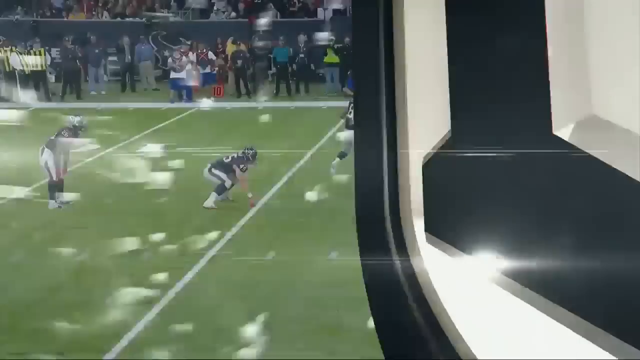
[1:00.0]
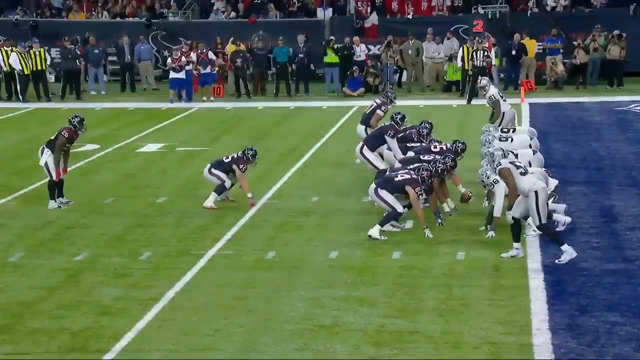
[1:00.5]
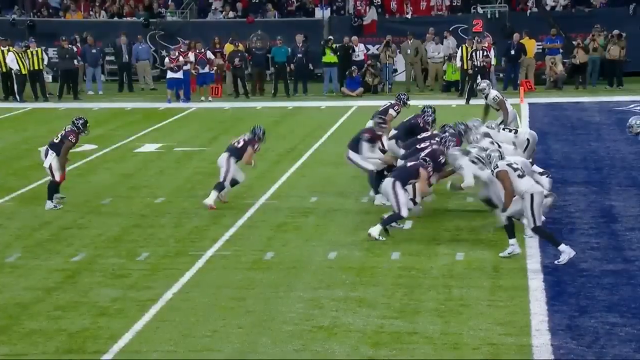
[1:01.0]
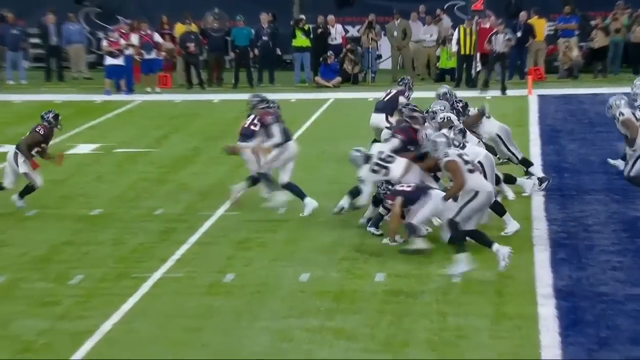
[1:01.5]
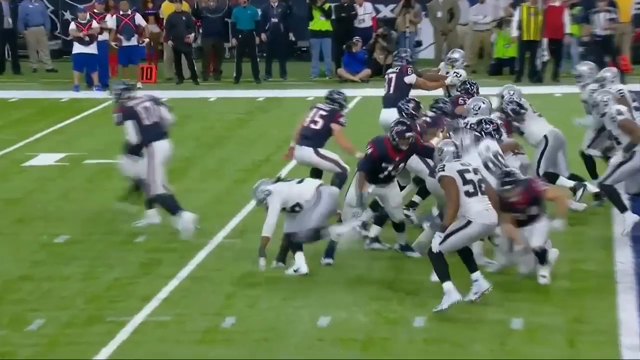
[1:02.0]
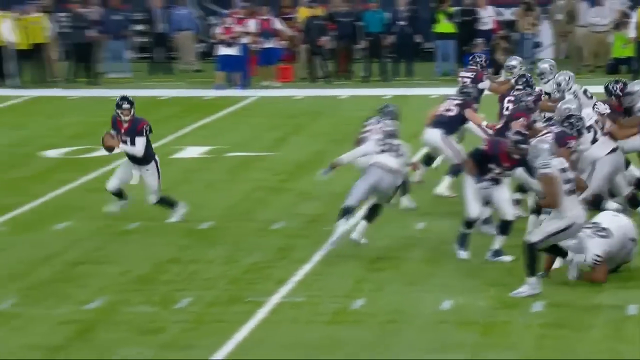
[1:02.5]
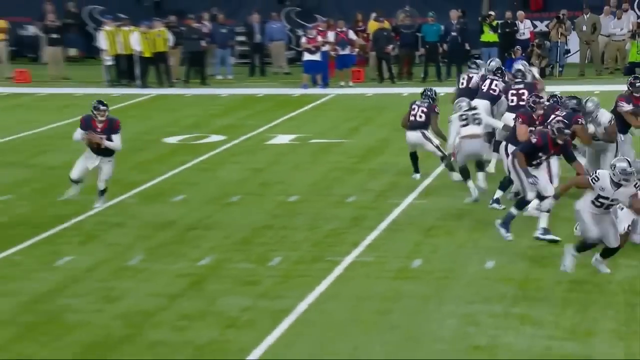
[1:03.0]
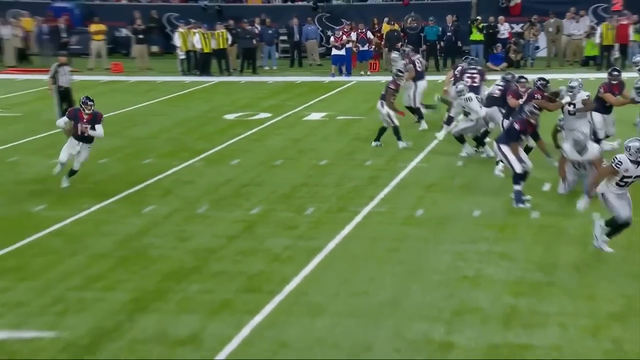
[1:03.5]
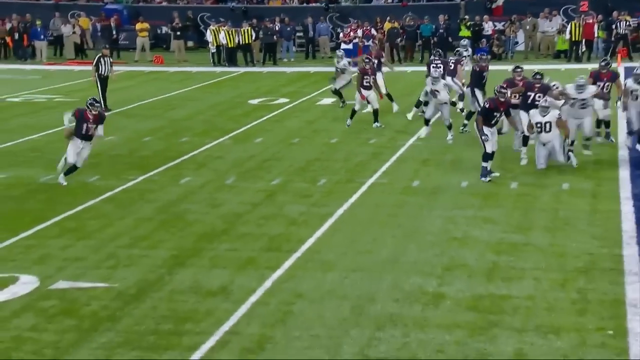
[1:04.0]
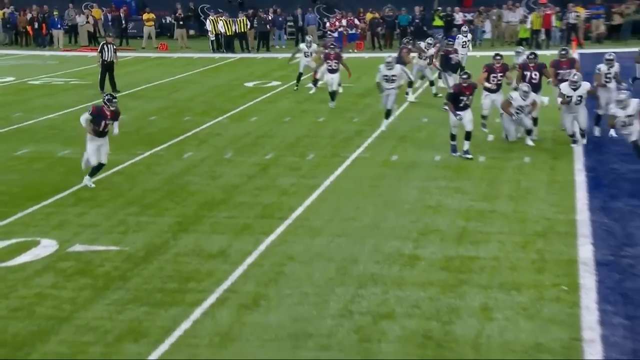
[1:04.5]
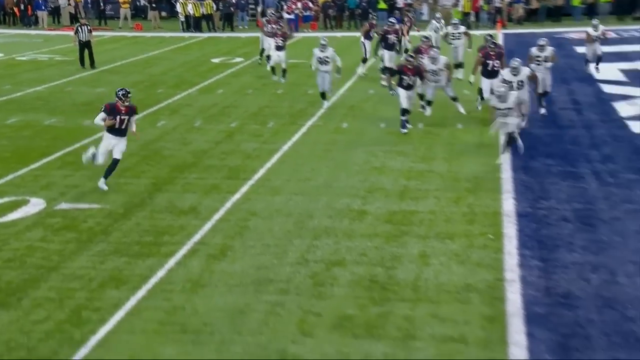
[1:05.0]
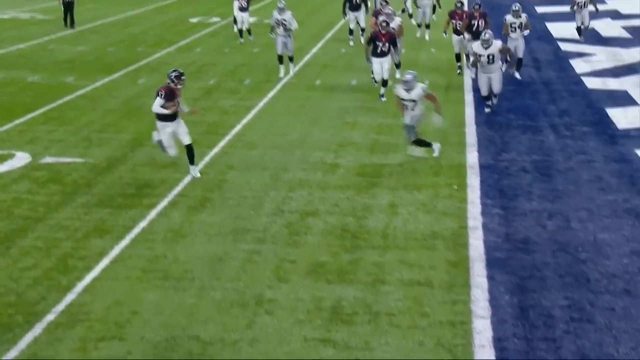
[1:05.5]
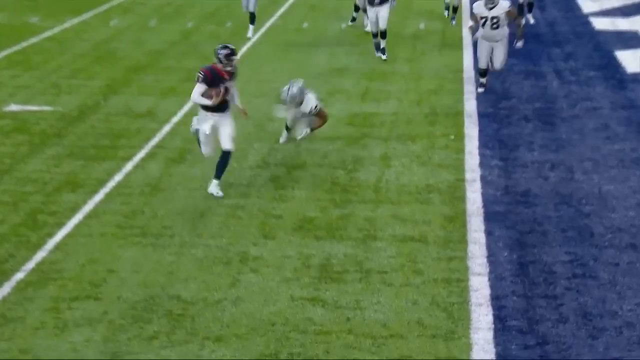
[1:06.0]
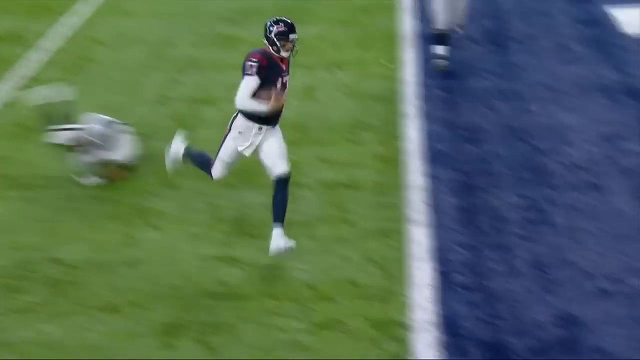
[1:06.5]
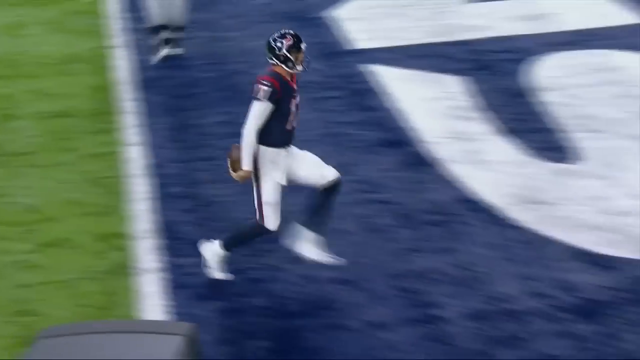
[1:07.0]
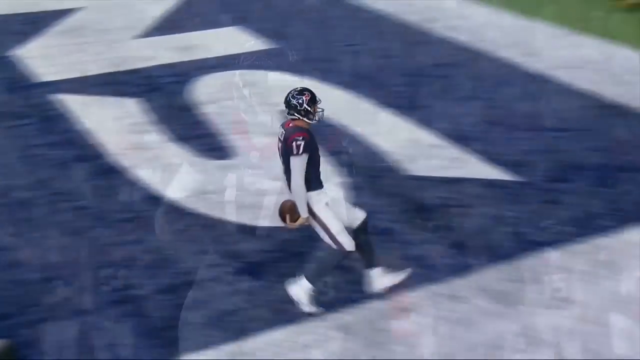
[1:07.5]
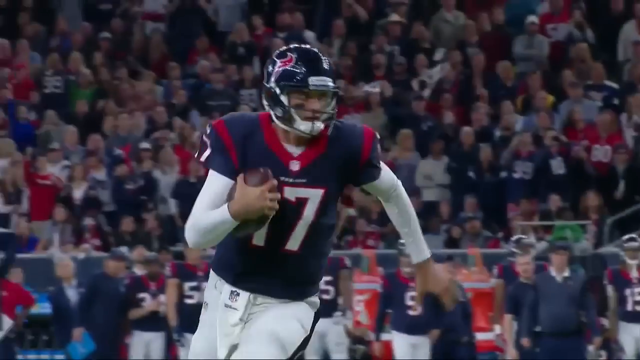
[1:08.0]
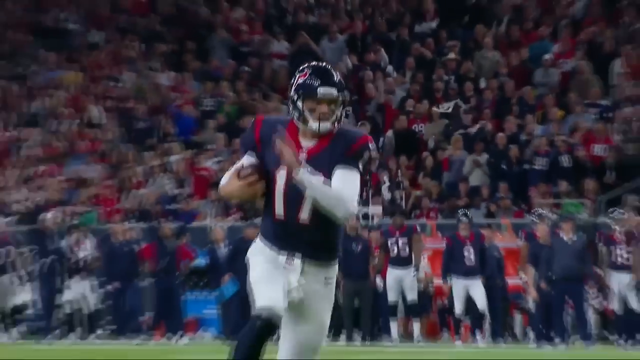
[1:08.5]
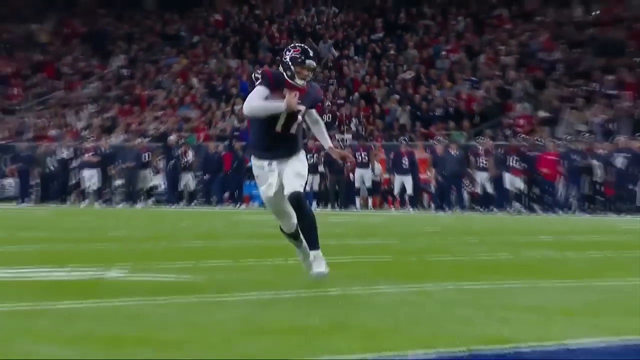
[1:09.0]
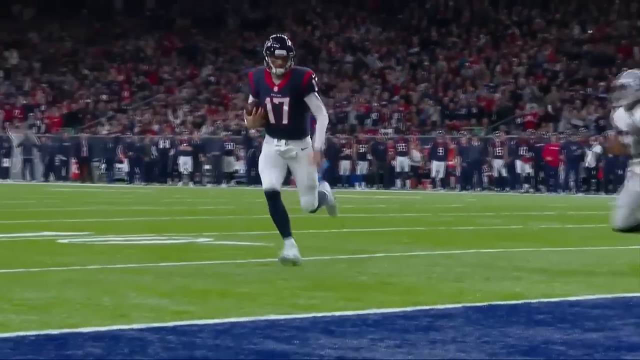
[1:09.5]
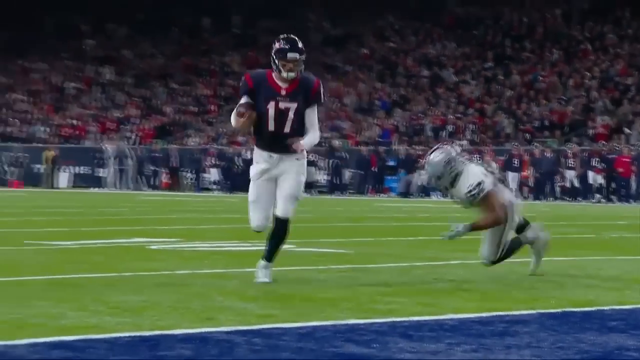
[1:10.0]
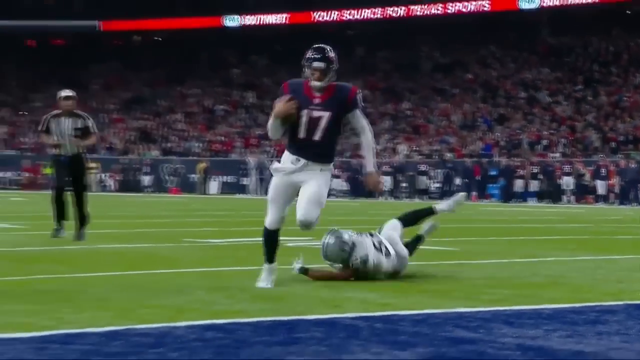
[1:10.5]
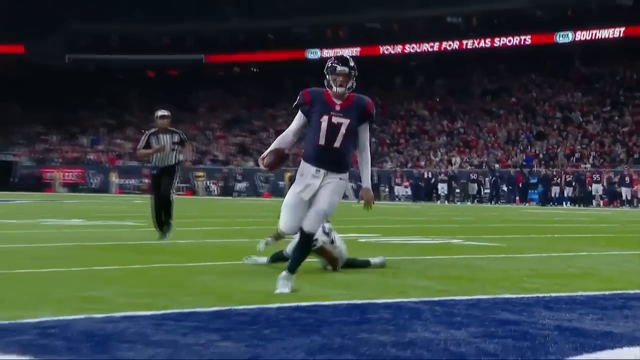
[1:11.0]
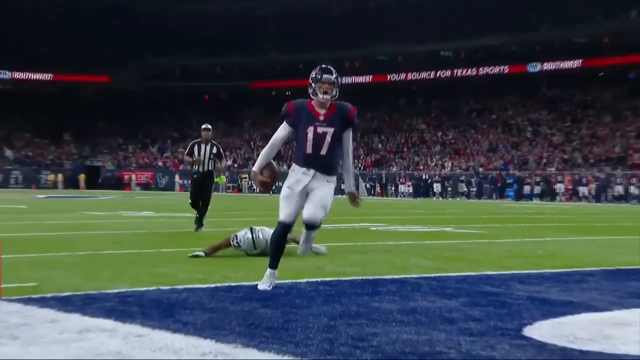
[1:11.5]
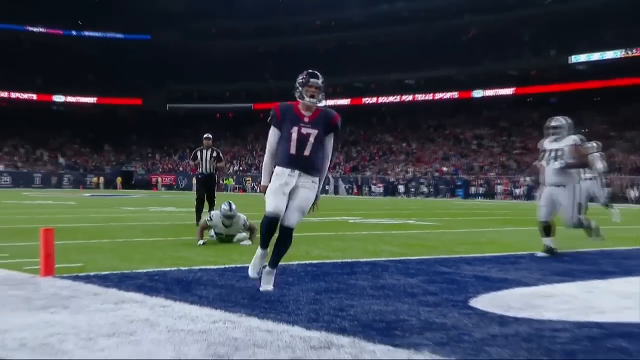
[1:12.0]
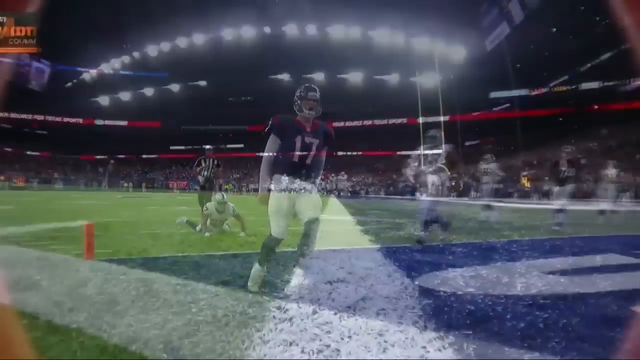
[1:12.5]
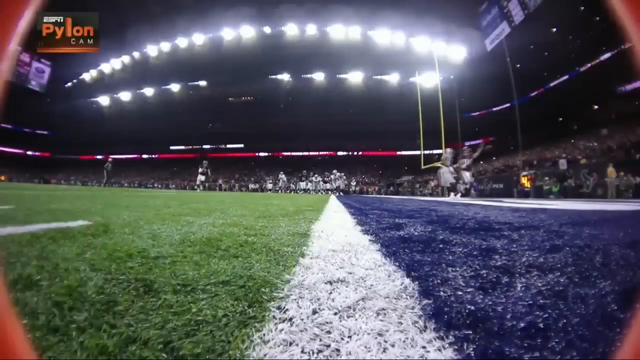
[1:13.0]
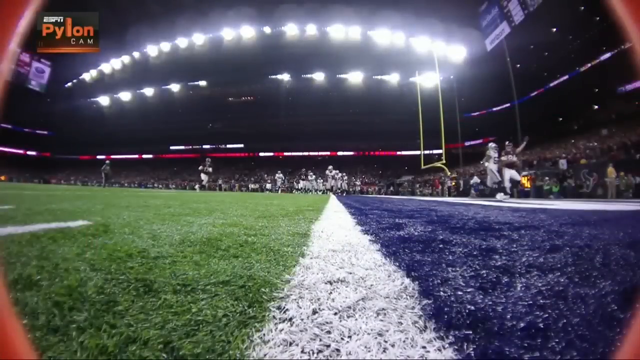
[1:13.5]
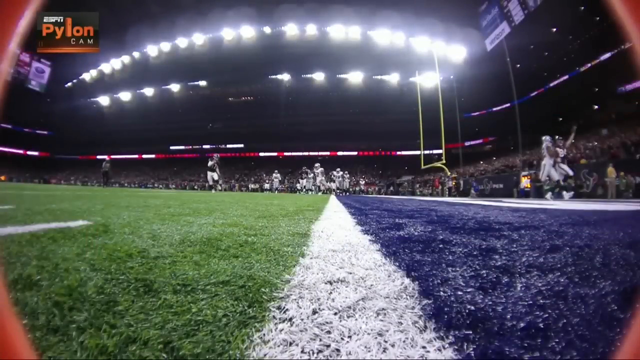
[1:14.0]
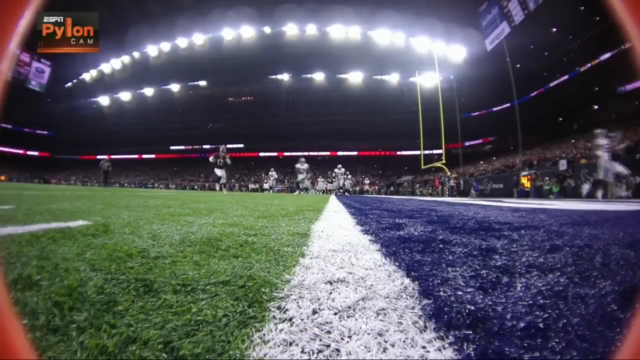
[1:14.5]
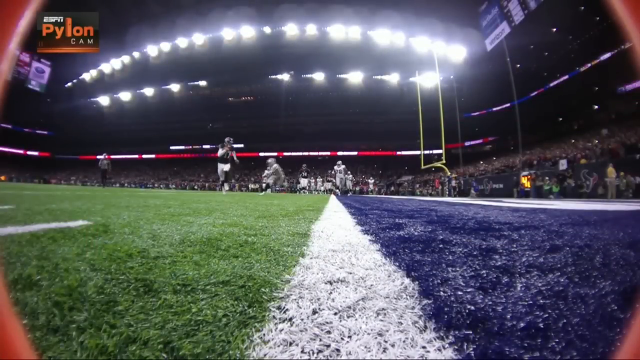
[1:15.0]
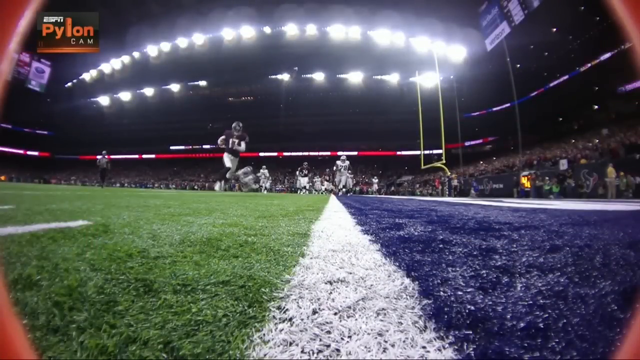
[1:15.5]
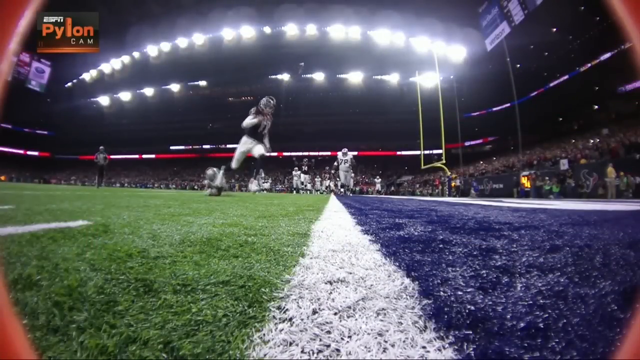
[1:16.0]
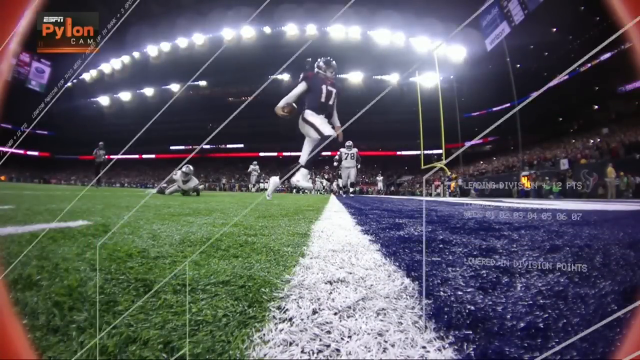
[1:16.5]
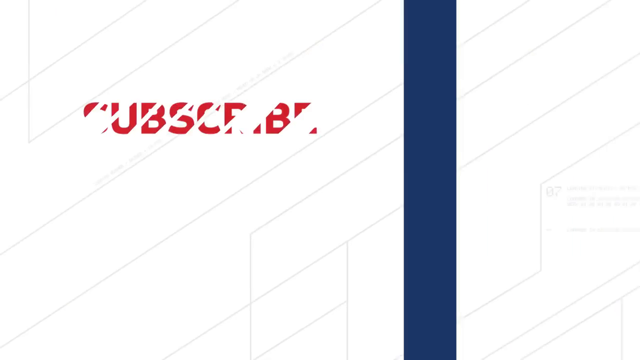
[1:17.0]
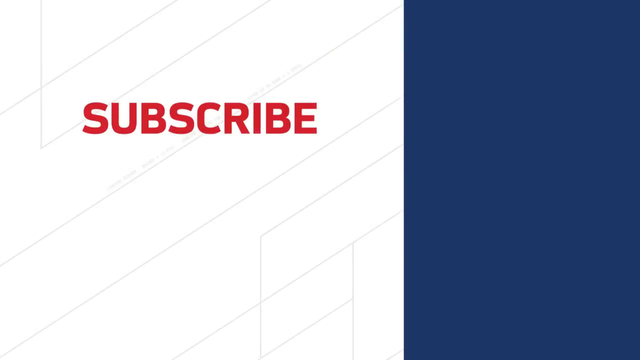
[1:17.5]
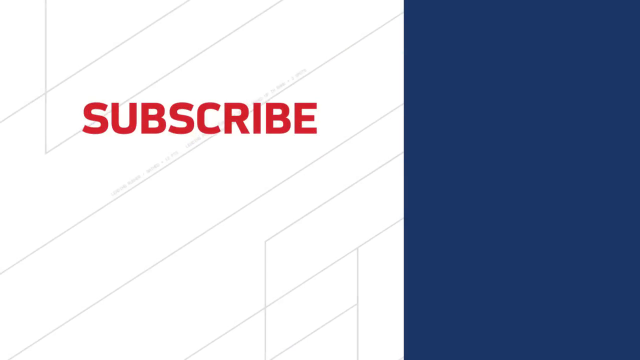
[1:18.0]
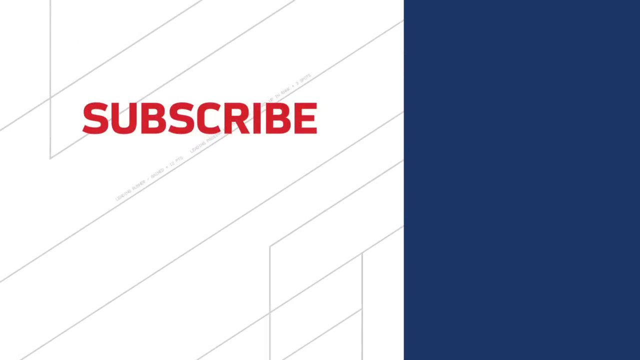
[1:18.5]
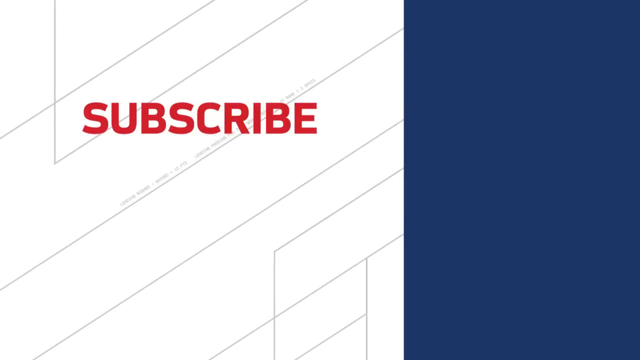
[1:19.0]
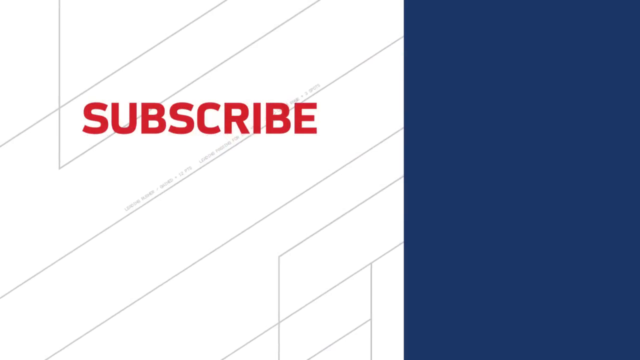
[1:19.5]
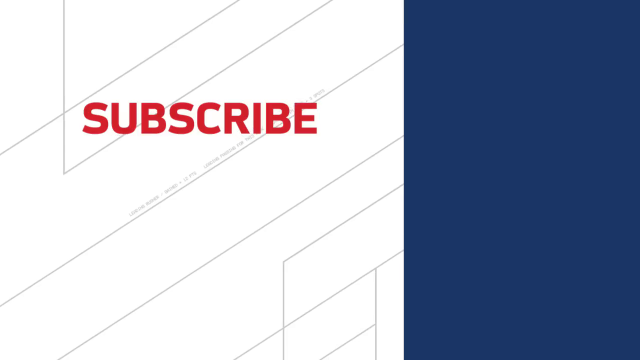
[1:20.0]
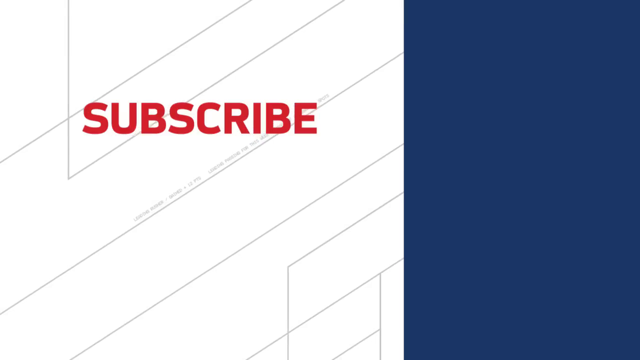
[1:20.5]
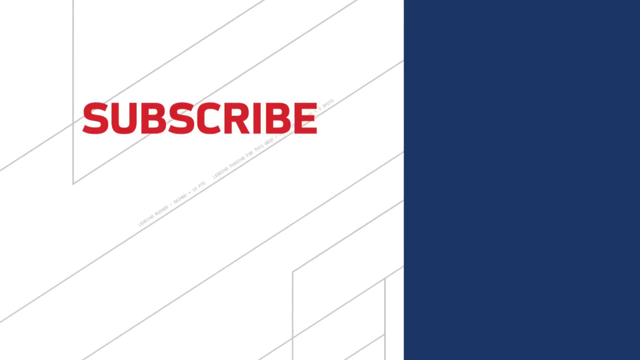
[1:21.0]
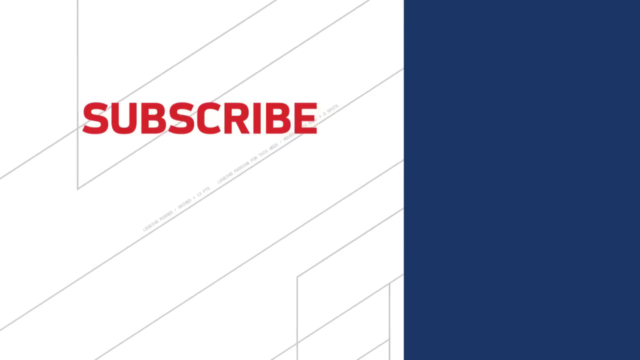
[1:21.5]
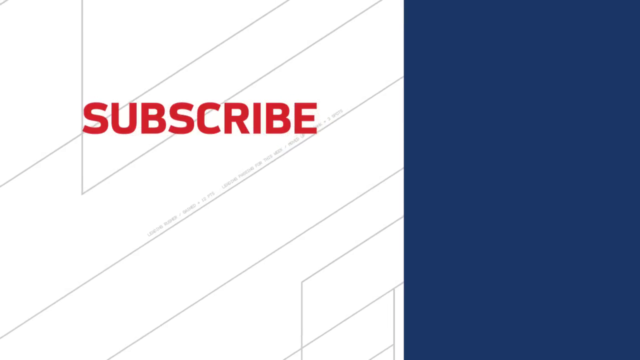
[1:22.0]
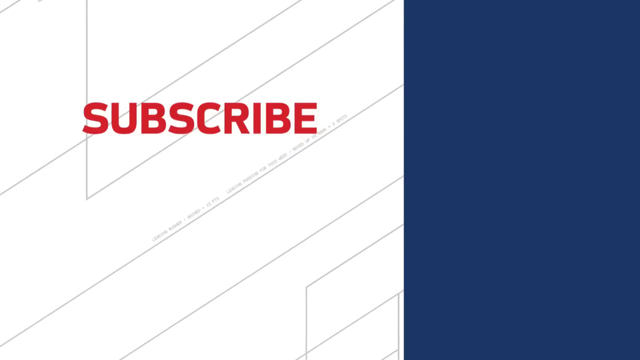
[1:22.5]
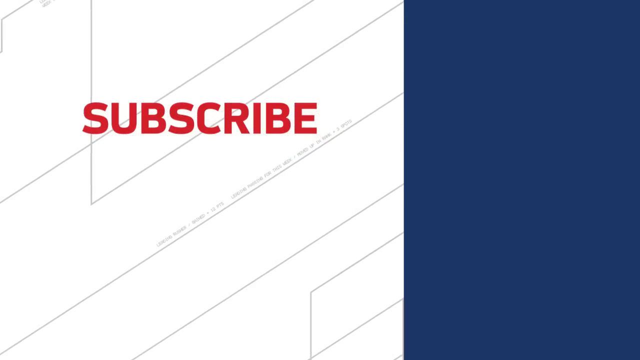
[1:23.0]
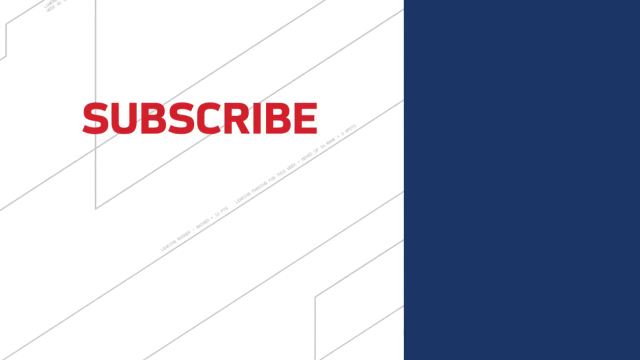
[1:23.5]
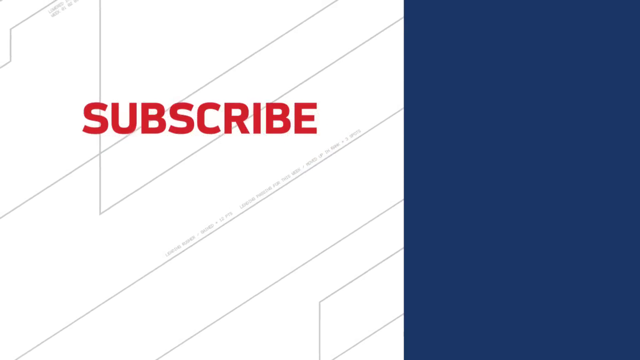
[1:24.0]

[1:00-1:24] Play starts, and the purple team runs with the ball while teammates follow, running around the pitch and fighting for the ball. A purple player throws the ball. Spectators watch; some wearing green jackets are inside the pitch, and others jump up and down, signalling and rejoicing as their team scores. The teams run all over the green pitch marked with white. At the end, text reads "subscribe to the channel".